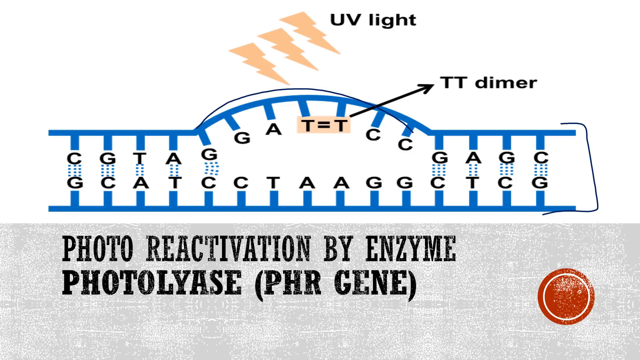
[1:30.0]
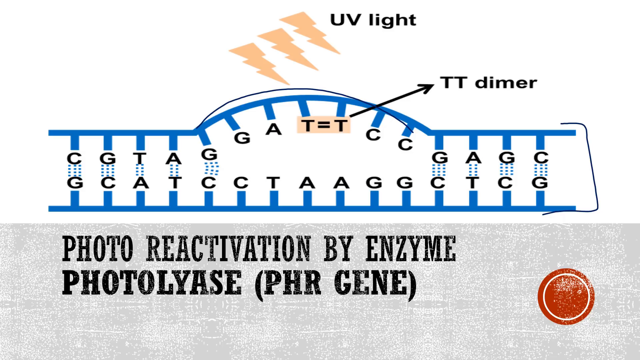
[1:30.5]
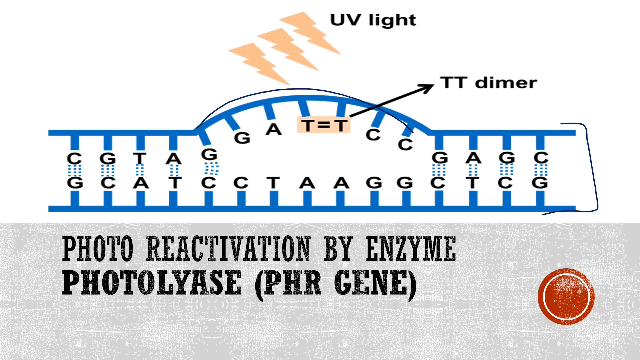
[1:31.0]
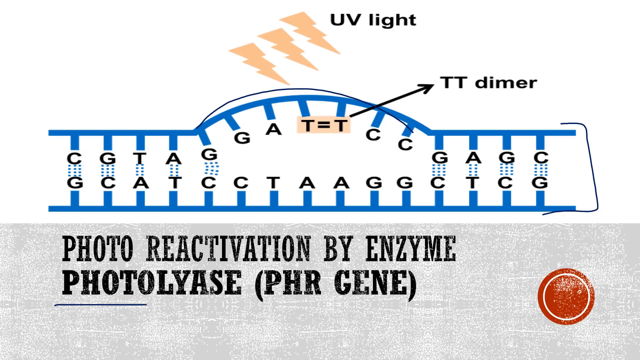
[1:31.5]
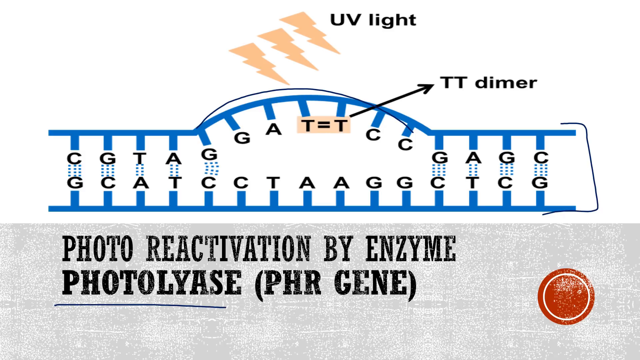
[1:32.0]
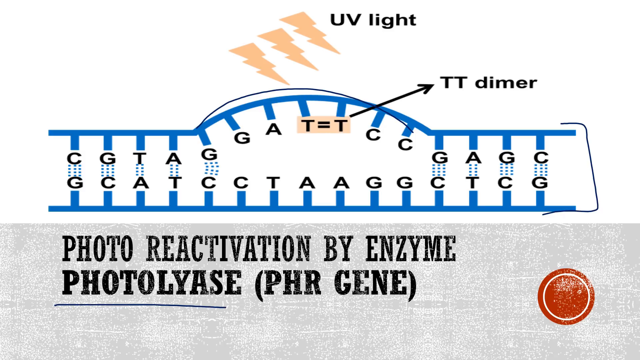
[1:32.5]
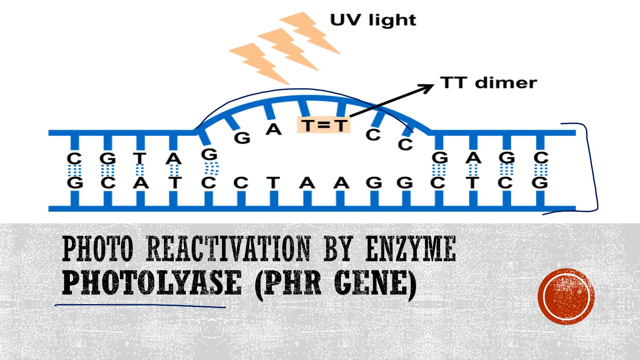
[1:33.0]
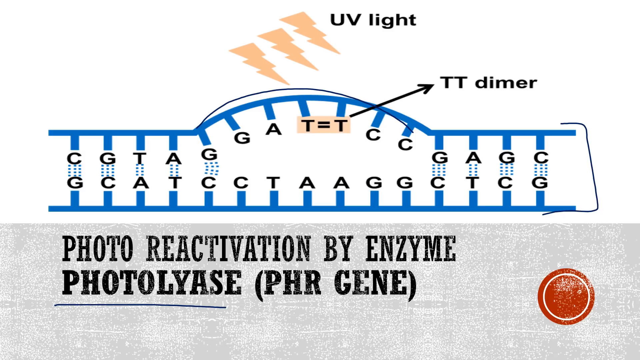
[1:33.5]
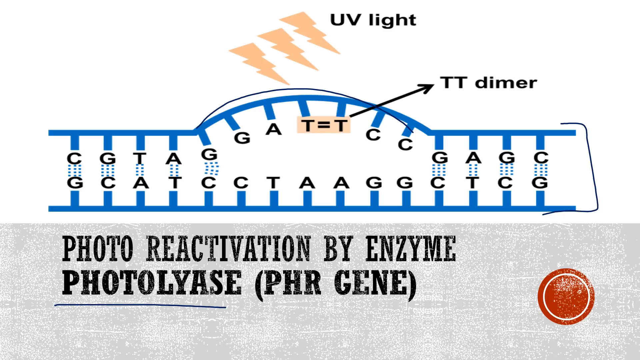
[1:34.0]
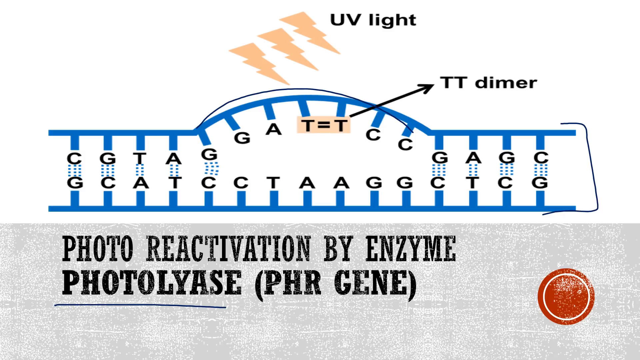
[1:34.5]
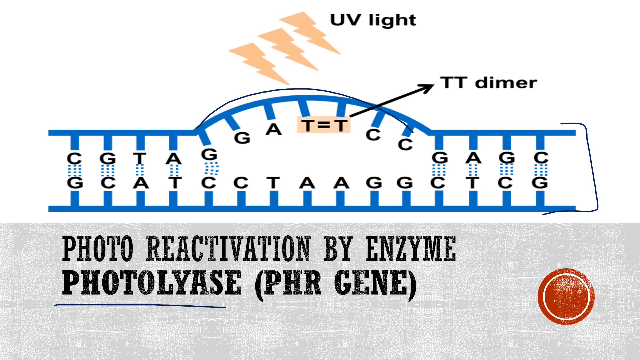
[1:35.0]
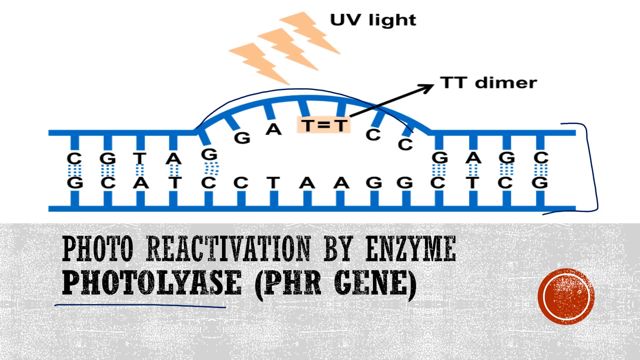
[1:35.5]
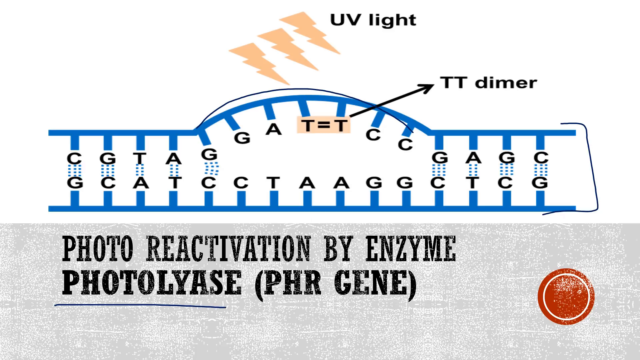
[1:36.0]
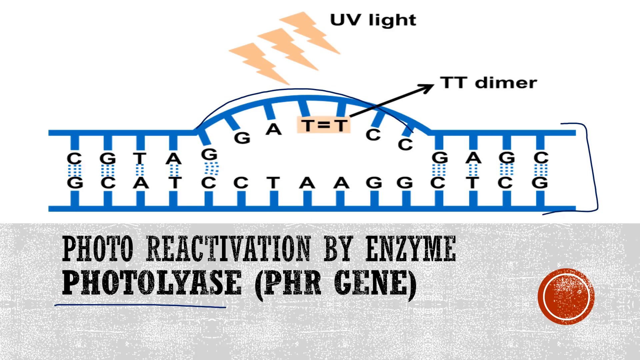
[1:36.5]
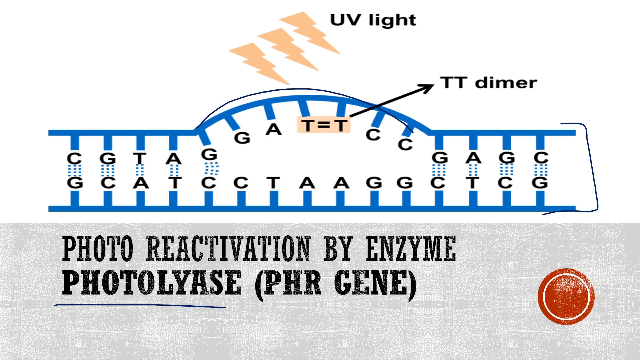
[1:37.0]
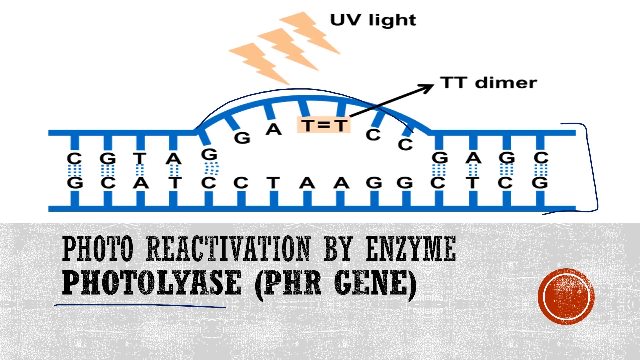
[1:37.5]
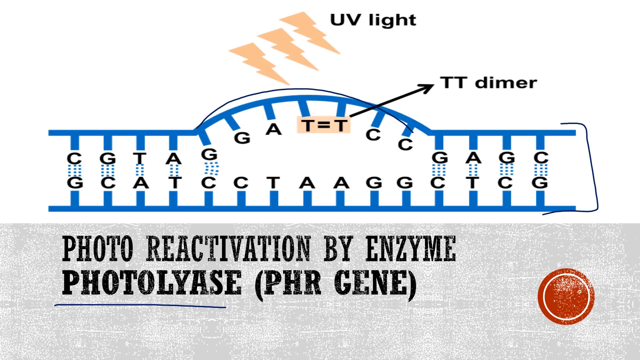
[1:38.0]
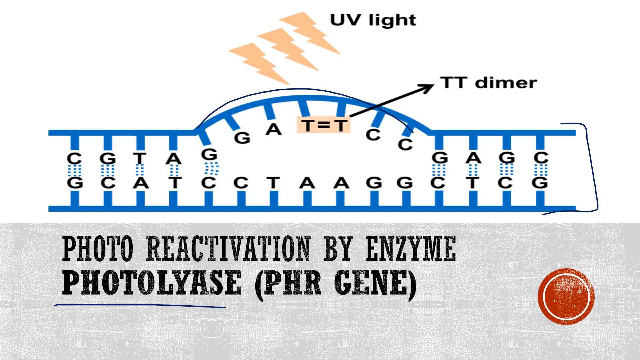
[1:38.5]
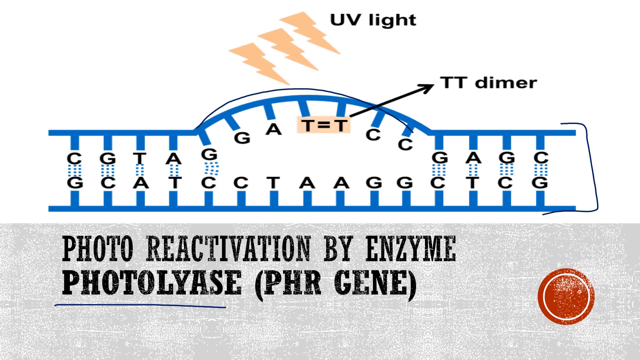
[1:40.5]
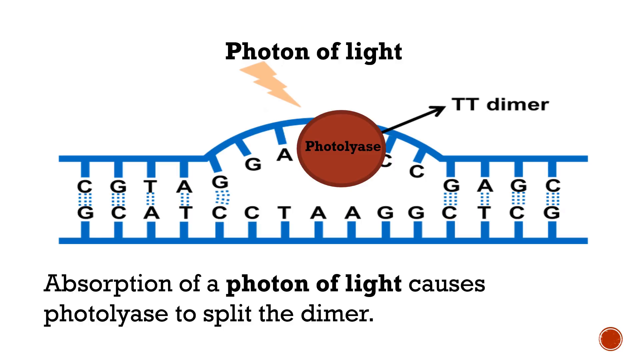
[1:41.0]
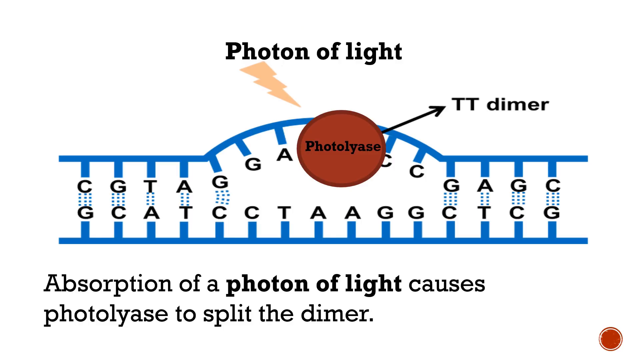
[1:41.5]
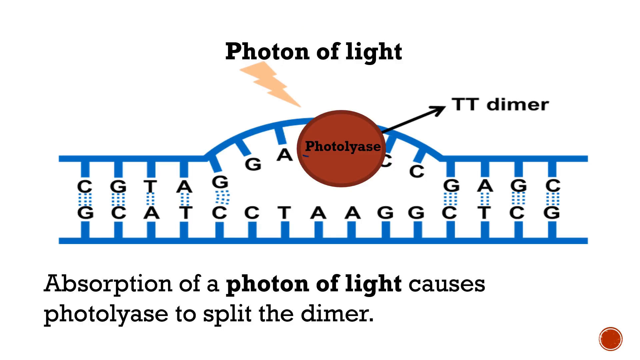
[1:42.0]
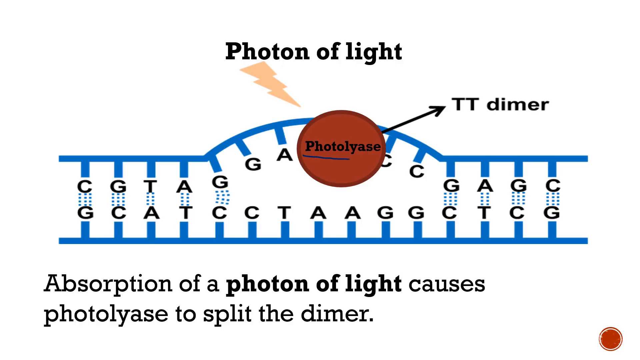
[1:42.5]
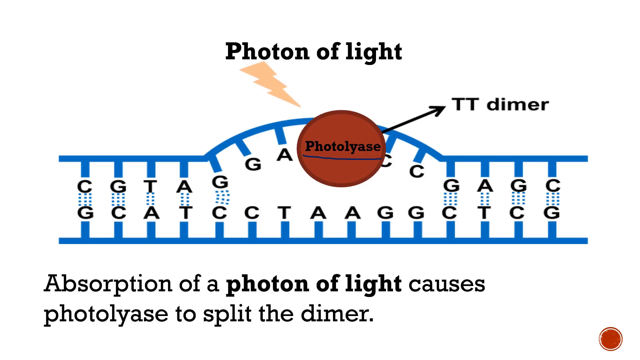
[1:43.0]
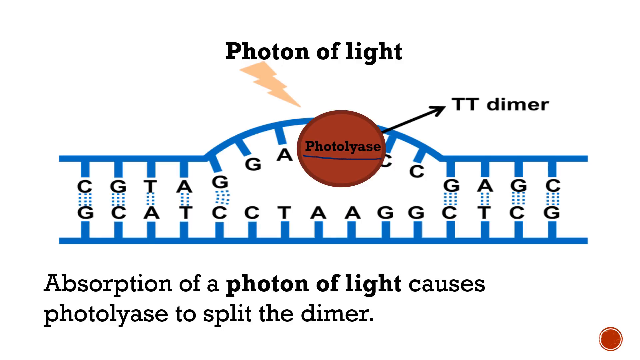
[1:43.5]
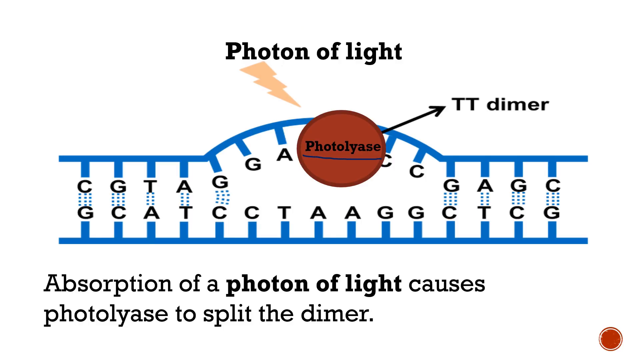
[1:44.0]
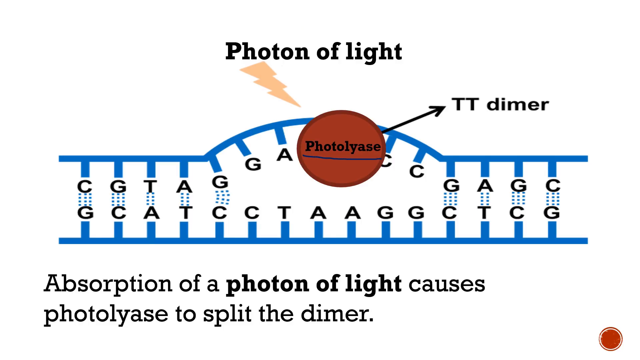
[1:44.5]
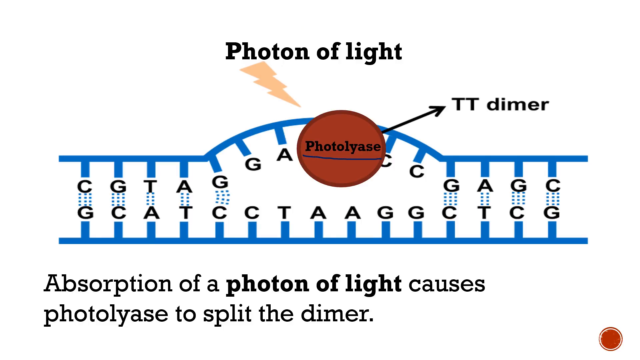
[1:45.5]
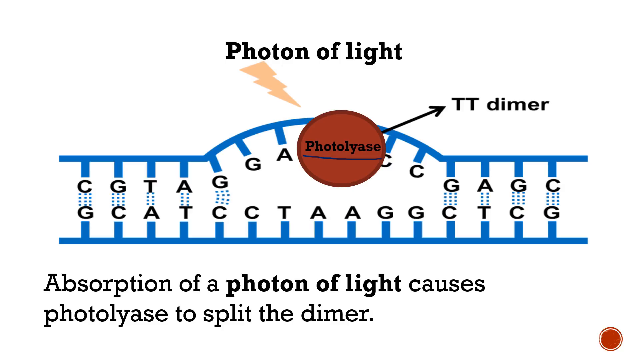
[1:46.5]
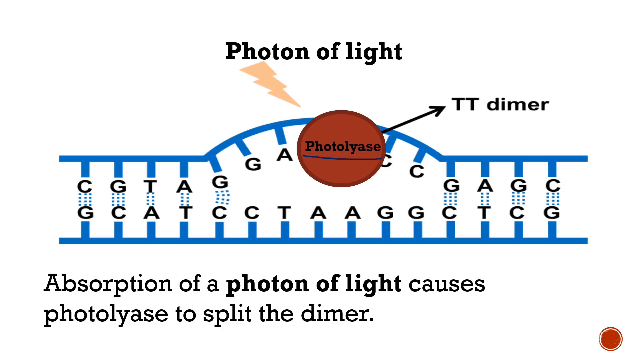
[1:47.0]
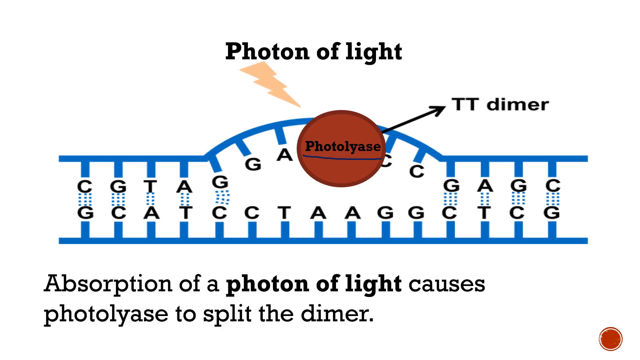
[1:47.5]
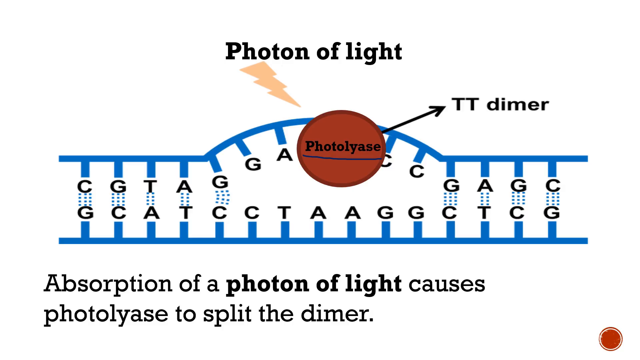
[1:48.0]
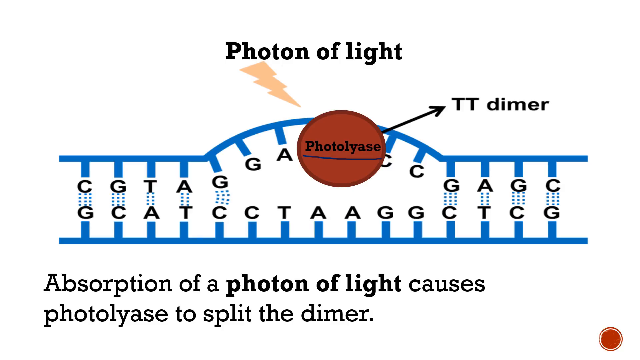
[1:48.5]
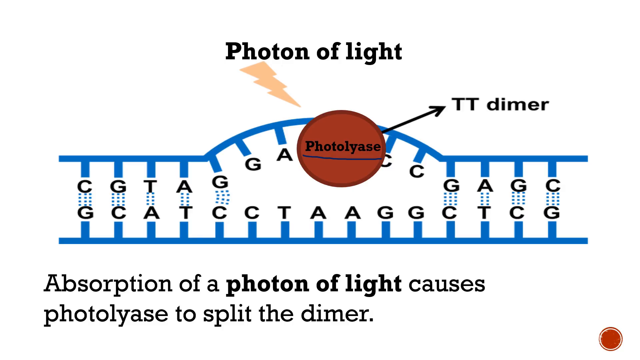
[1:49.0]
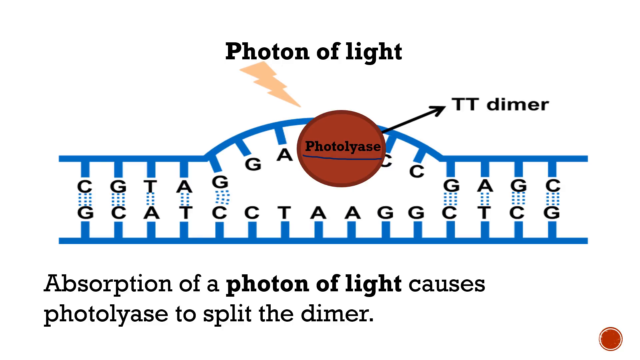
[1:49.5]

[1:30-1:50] The diagram shows a thymine dimer formed by UV light, and the enzyme kind of attacking the thymine dimer formation.